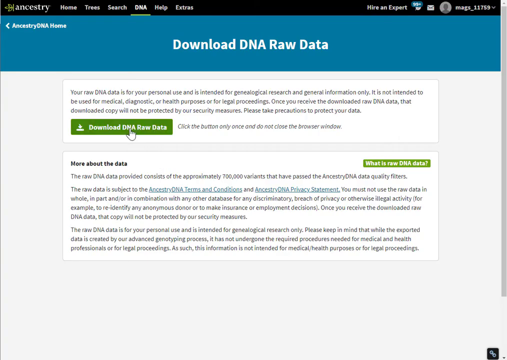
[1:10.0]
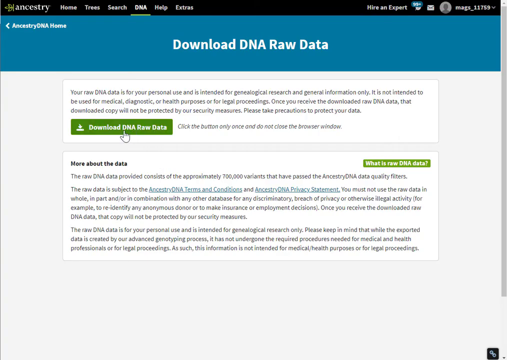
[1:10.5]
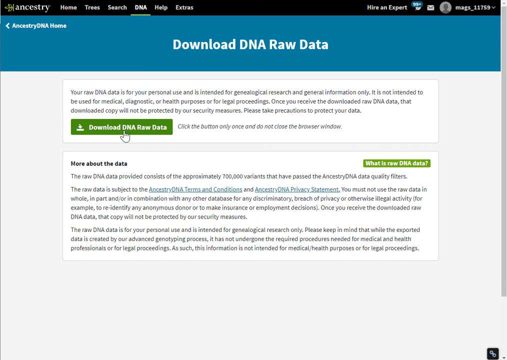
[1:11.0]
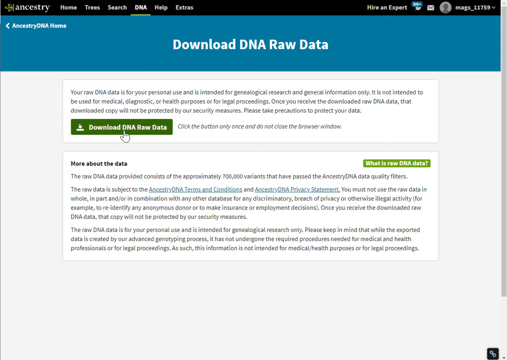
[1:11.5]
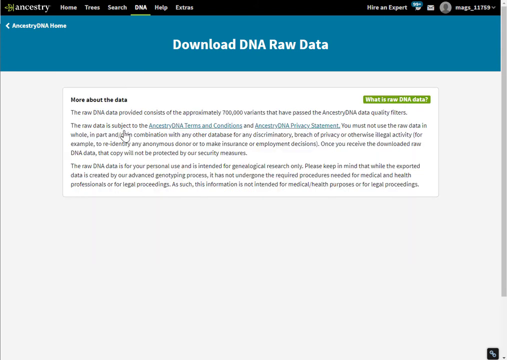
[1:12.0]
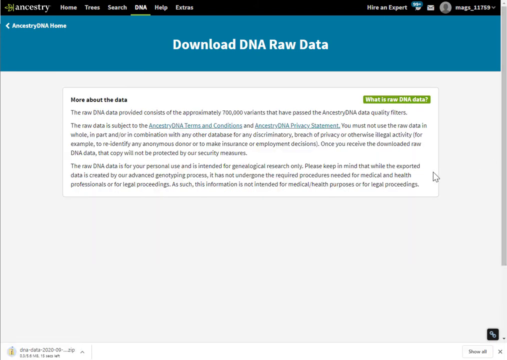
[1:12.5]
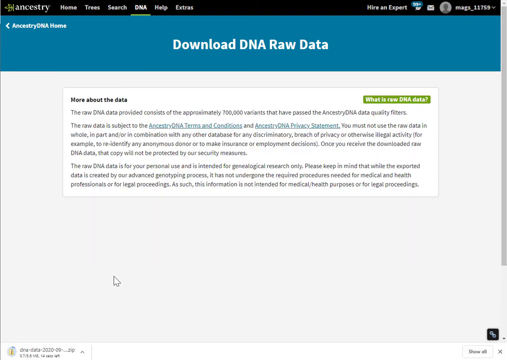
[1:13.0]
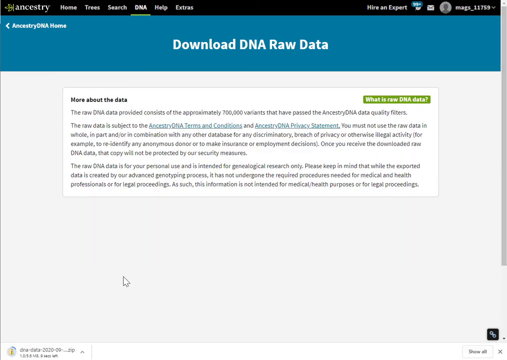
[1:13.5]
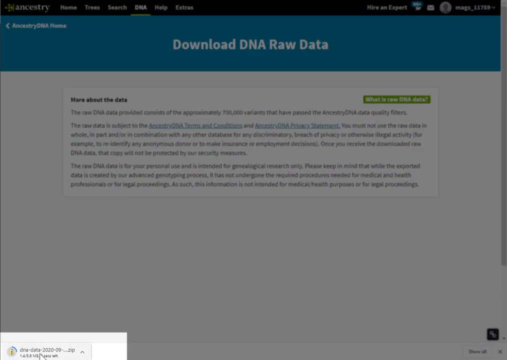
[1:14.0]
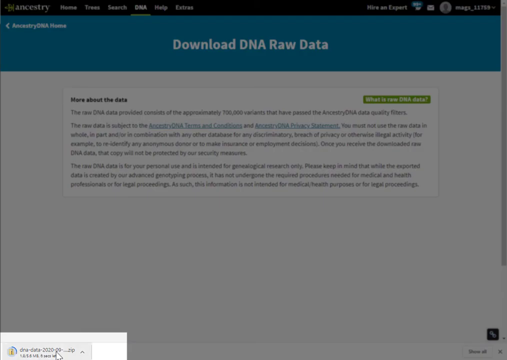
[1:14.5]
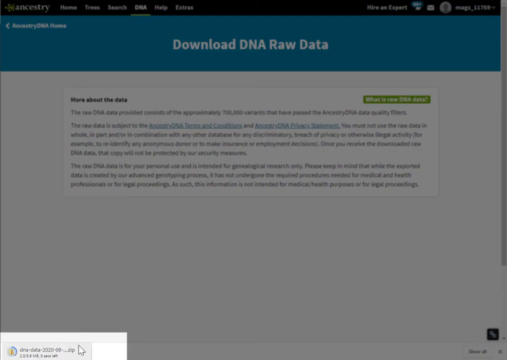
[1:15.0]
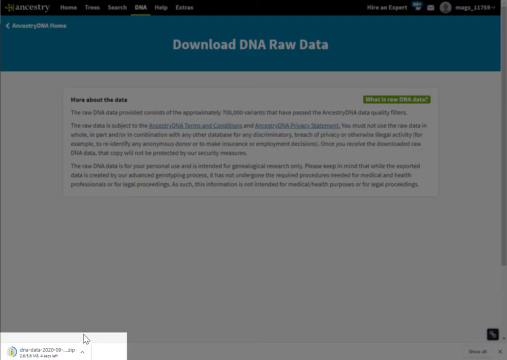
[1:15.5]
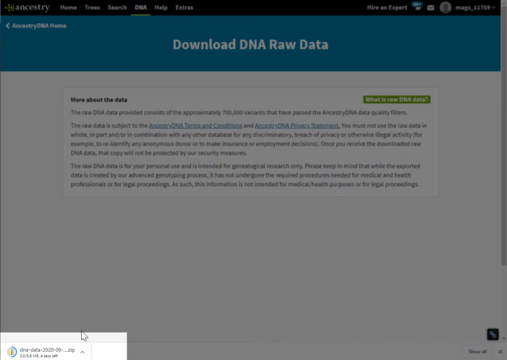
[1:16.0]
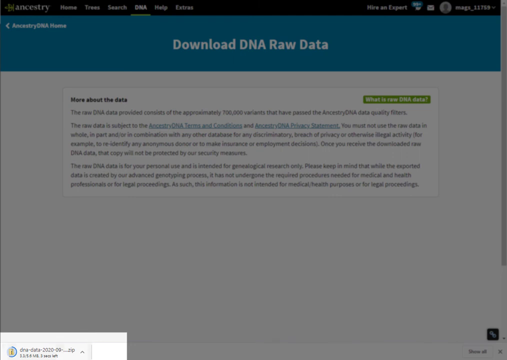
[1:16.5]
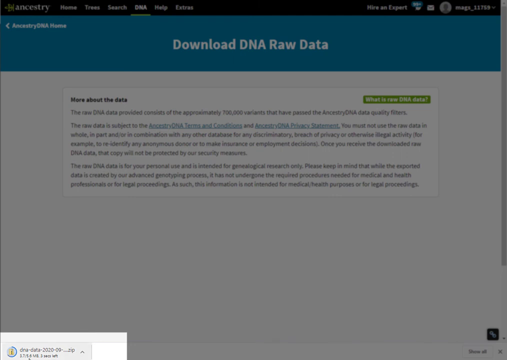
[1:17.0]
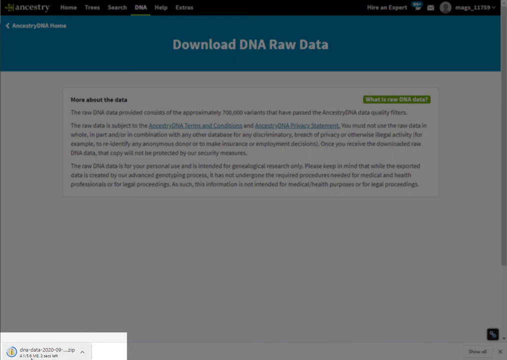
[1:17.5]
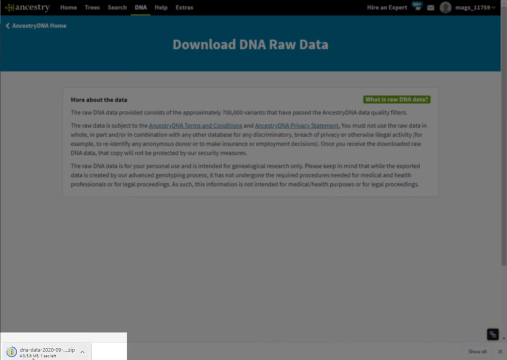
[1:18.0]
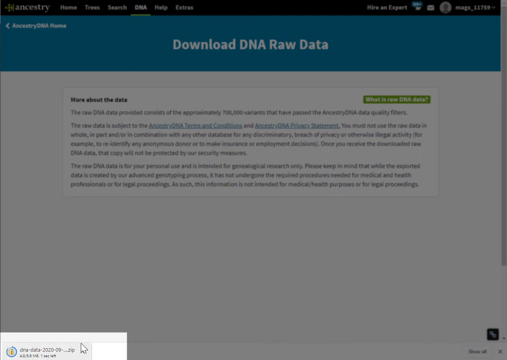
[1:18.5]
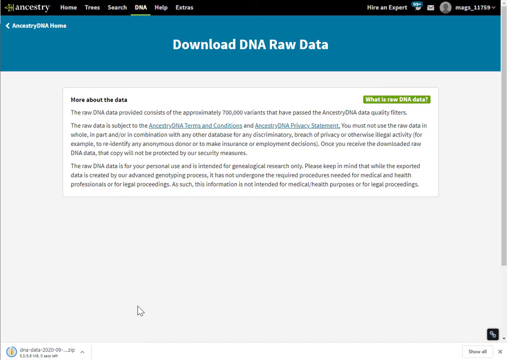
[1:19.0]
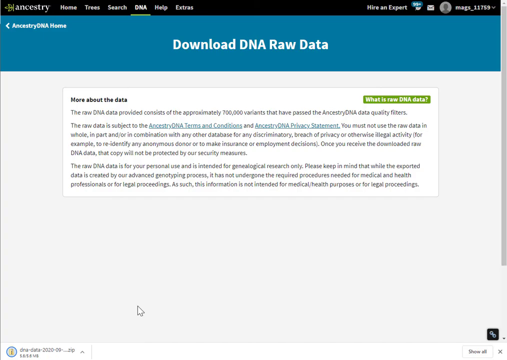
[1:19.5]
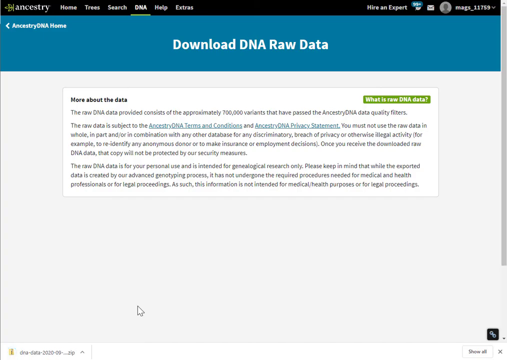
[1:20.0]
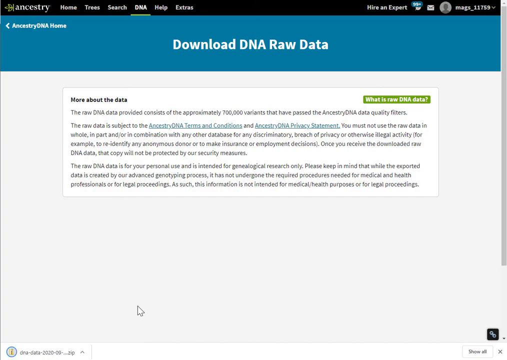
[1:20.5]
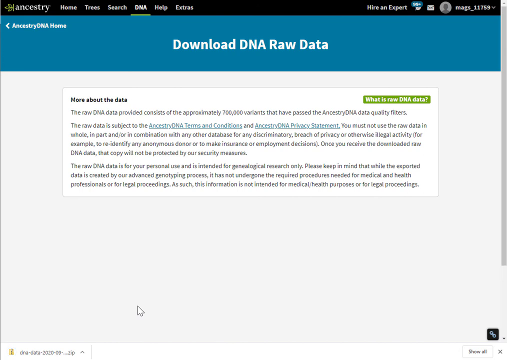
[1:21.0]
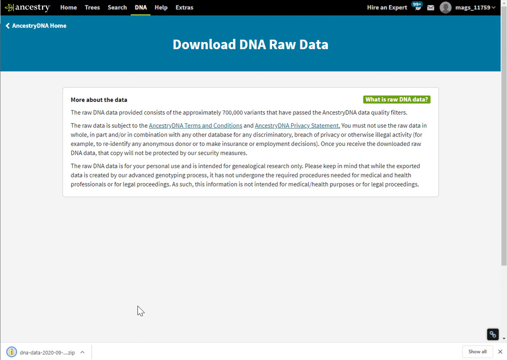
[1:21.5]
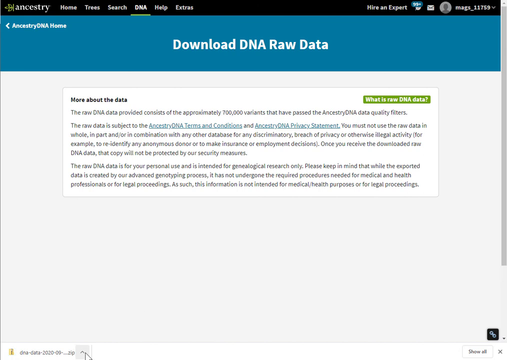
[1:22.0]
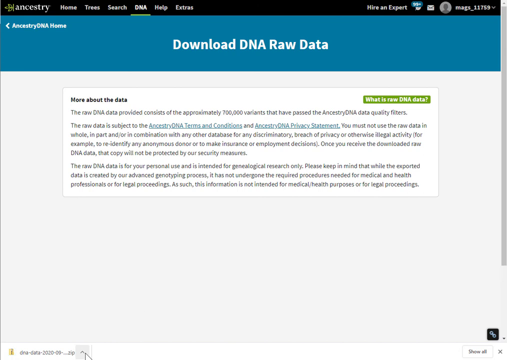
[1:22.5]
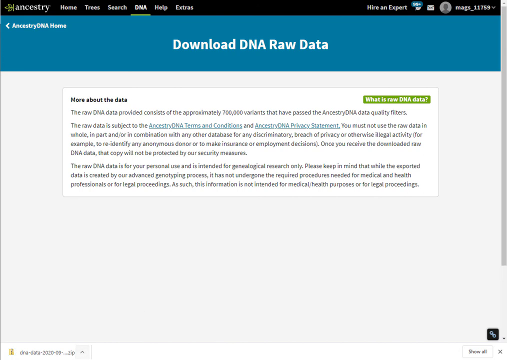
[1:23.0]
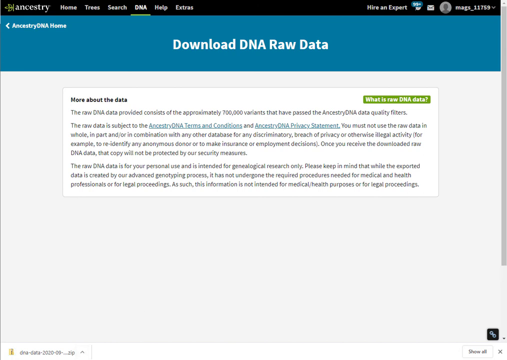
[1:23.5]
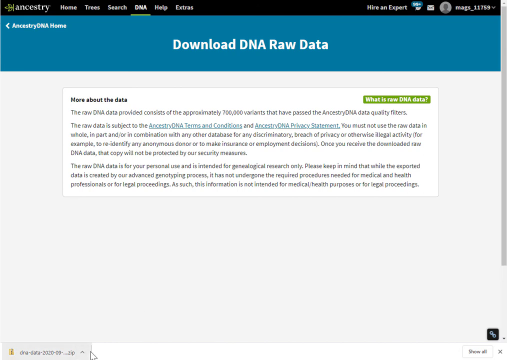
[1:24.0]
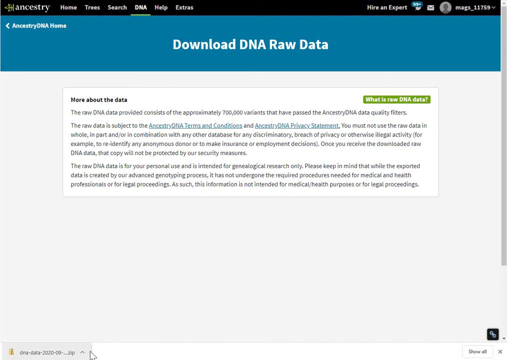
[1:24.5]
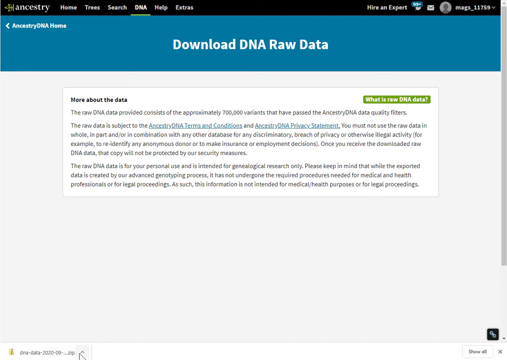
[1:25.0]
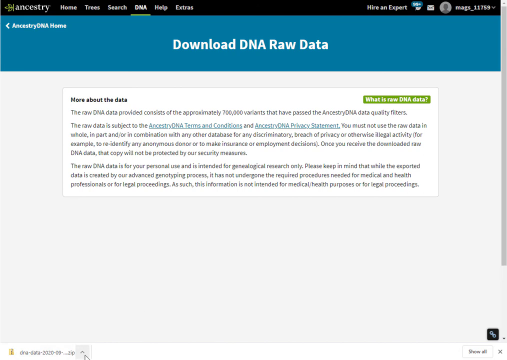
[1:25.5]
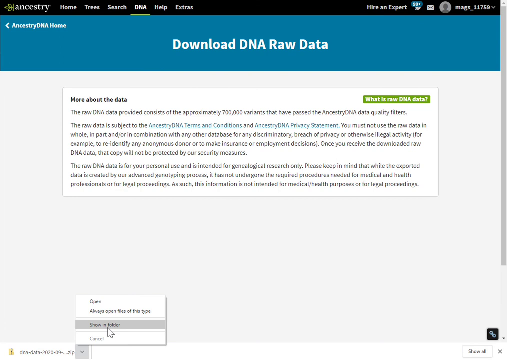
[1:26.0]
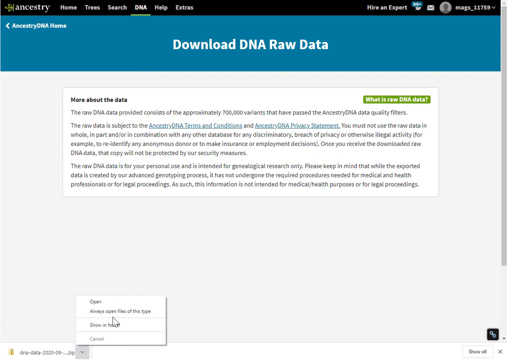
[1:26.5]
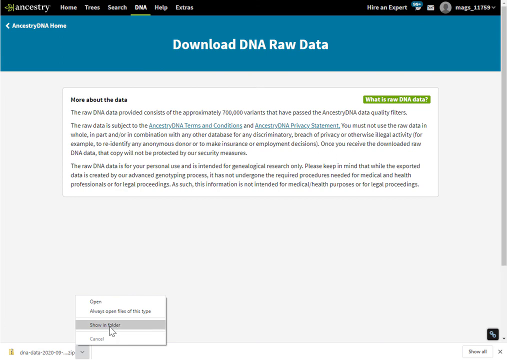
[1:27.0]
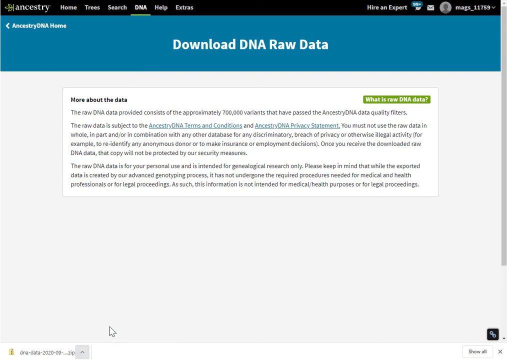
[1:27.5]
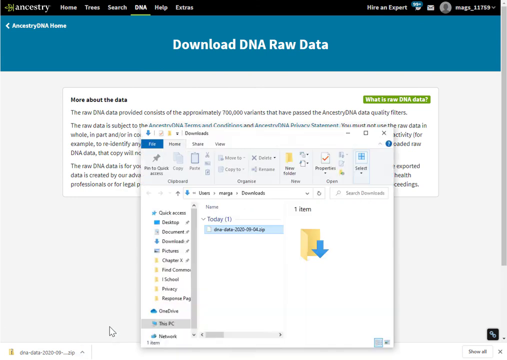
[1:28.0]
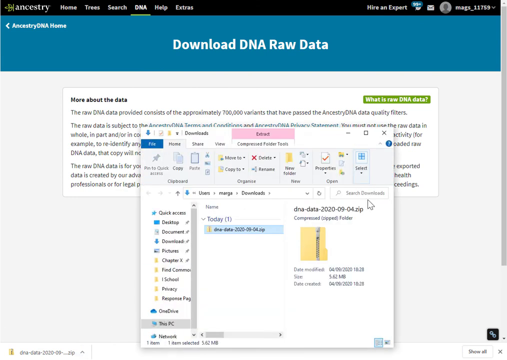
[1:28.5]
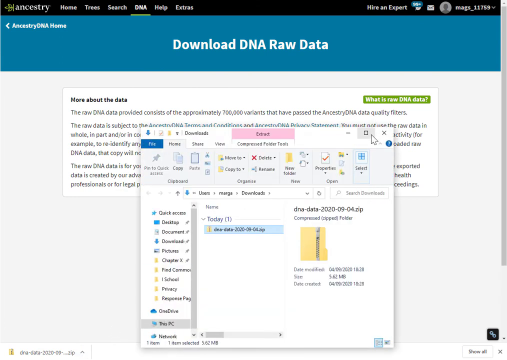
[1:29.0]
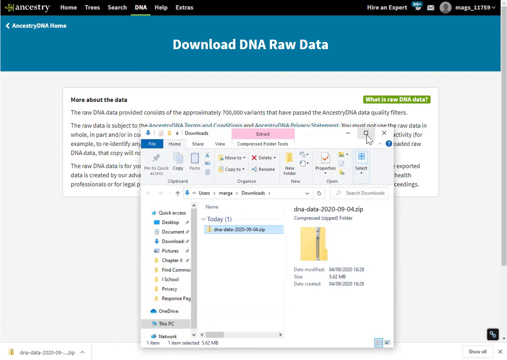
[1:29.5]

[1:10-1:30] The download DNA page opens, with large bold center text and a large blue banner-like area at the top beneath Ancestry and the home and tree options. Below it is "download DNA raw data" and another white box about the data, and at the far right is a green box that says "raw DNA data." Terms and conditions and a privacy statement are at the bottom as blue hyperlinks. Clicking one shows "more about your data" in a white box by itself, unlike the other page, which had two boxes stacked with a little gray space between them. The arrow goes down but is hard to see. The whole page fades to gray, with a little white rectangle at the bottom left, then becomes bright again. A scroll bar is visible on the right. They right-click, a little box pops up, and they click the option "always open files of this type." A box then pops up containing a zip file under today, with a date modified column.